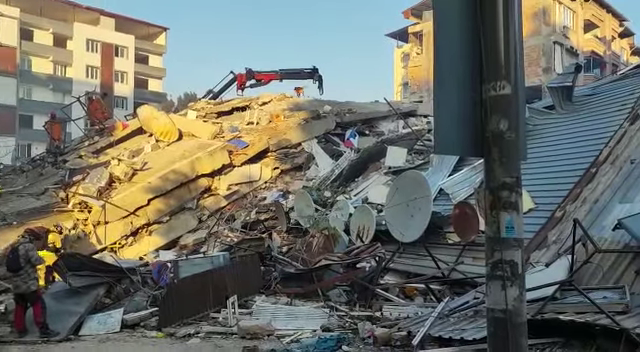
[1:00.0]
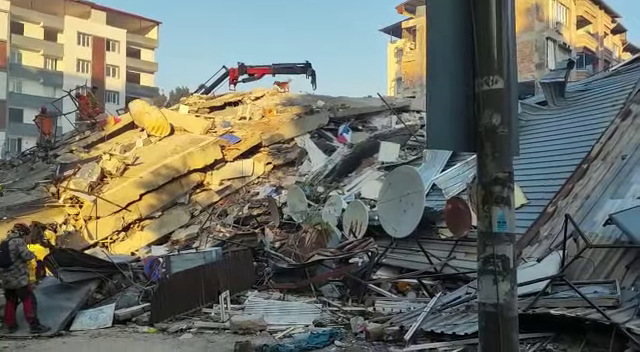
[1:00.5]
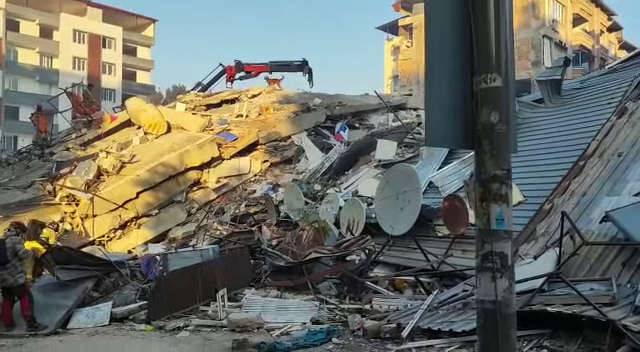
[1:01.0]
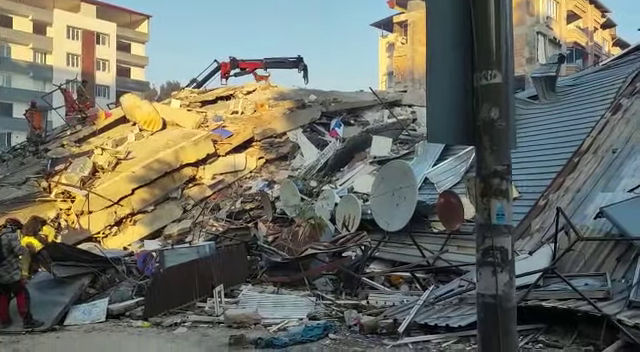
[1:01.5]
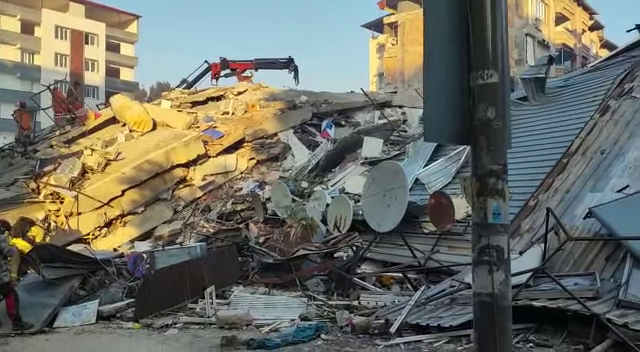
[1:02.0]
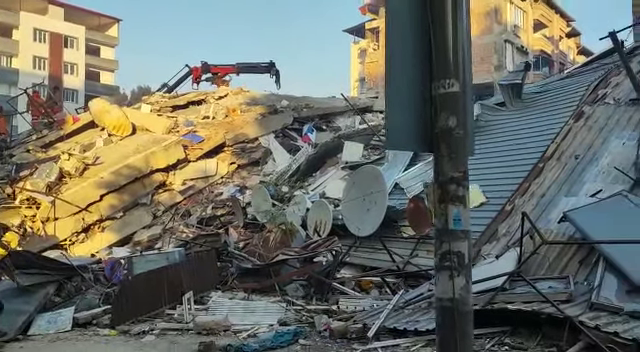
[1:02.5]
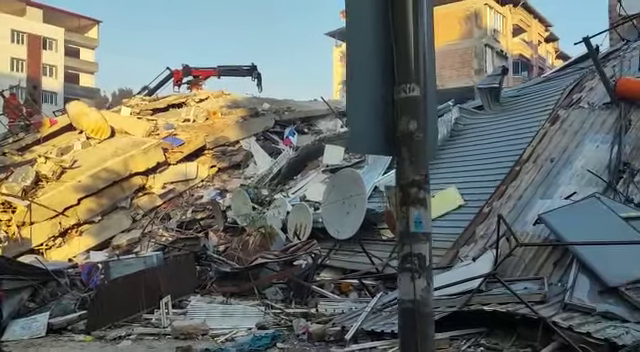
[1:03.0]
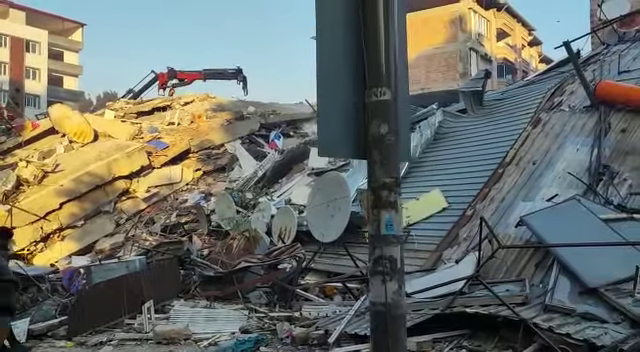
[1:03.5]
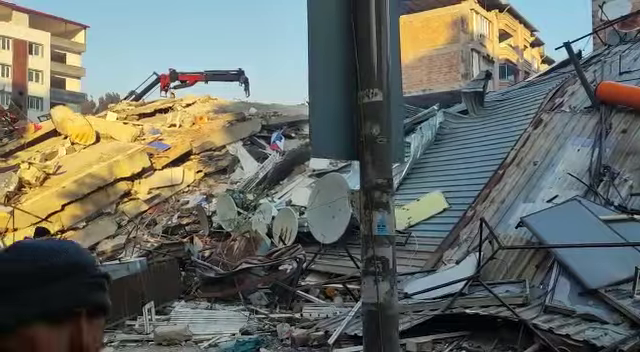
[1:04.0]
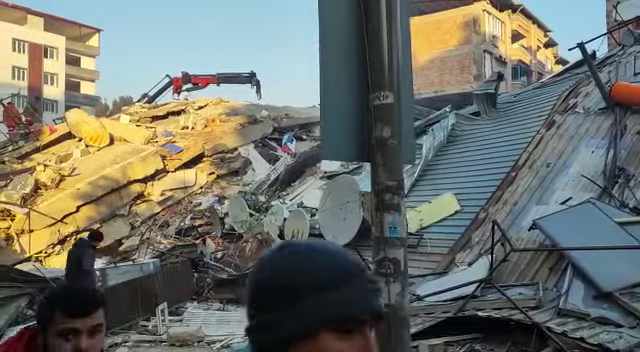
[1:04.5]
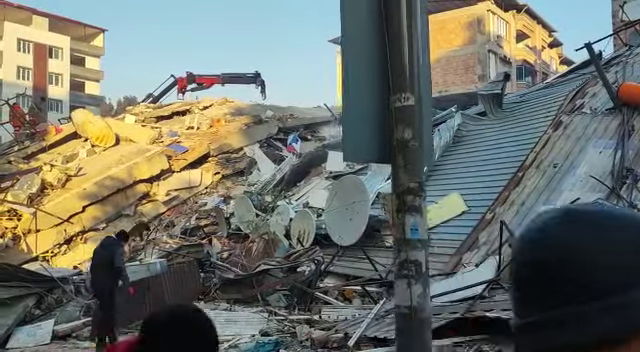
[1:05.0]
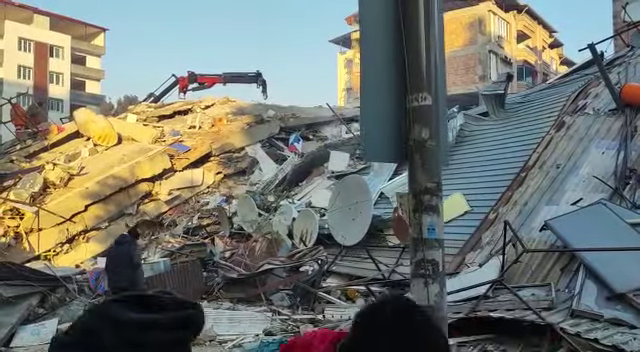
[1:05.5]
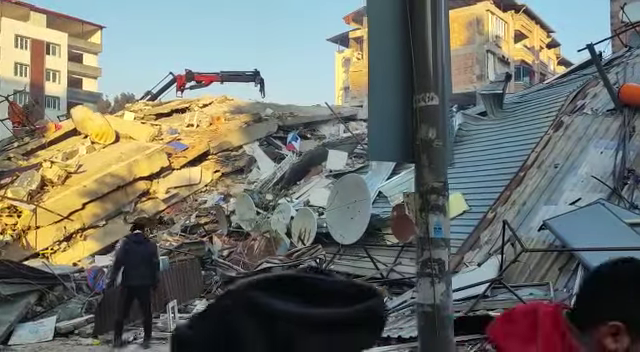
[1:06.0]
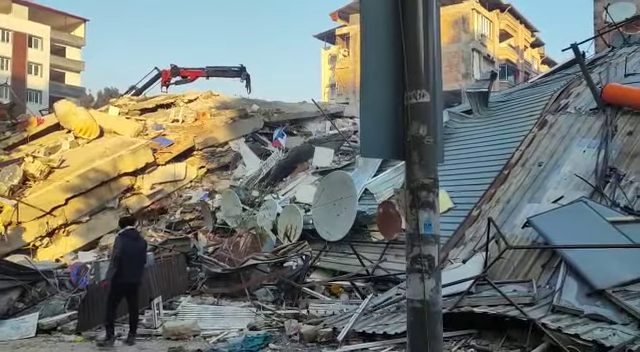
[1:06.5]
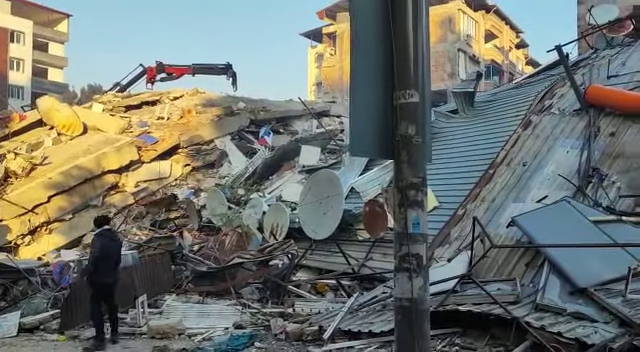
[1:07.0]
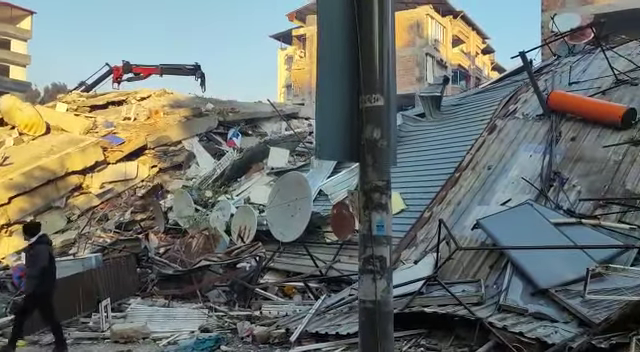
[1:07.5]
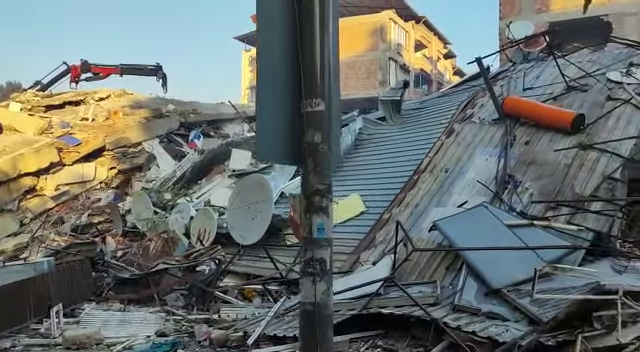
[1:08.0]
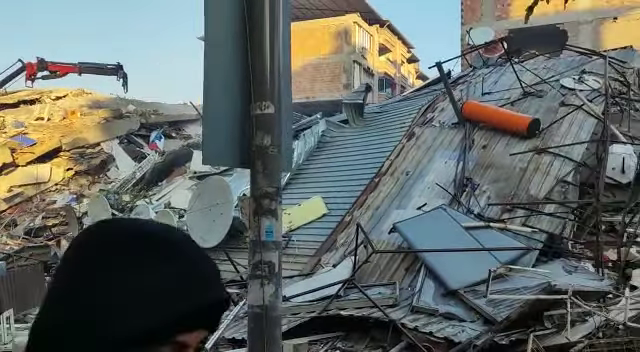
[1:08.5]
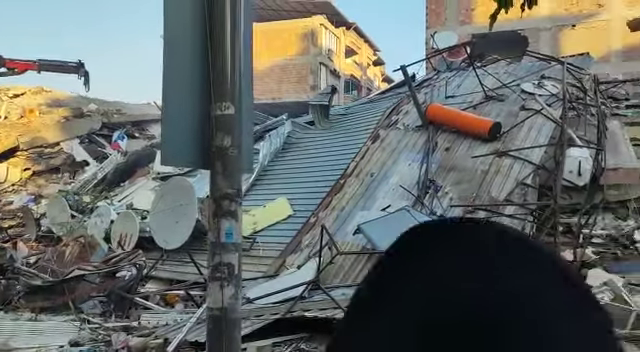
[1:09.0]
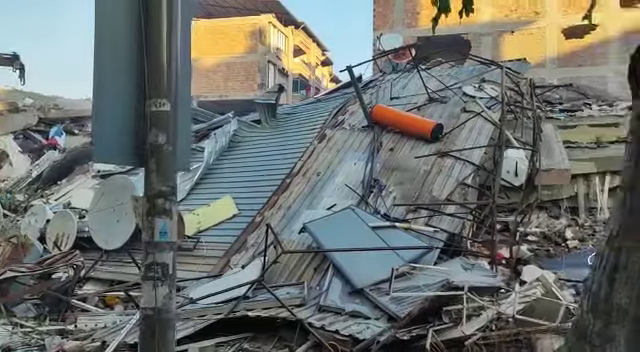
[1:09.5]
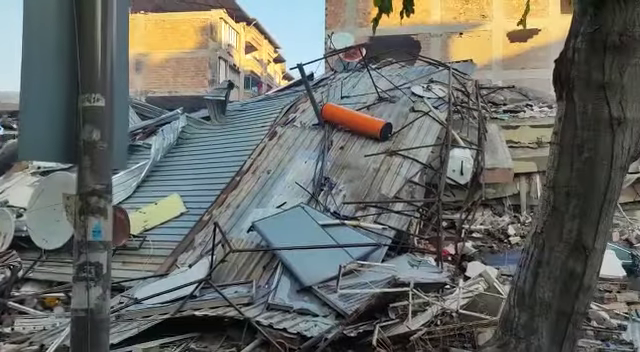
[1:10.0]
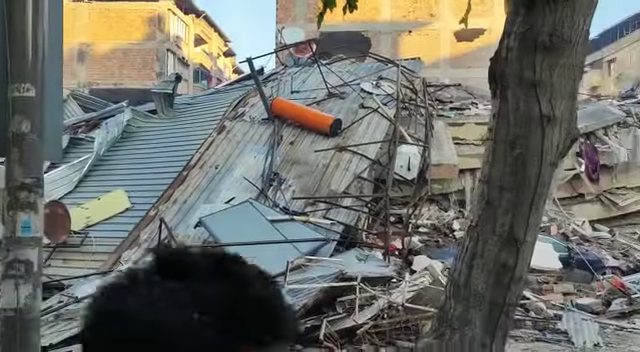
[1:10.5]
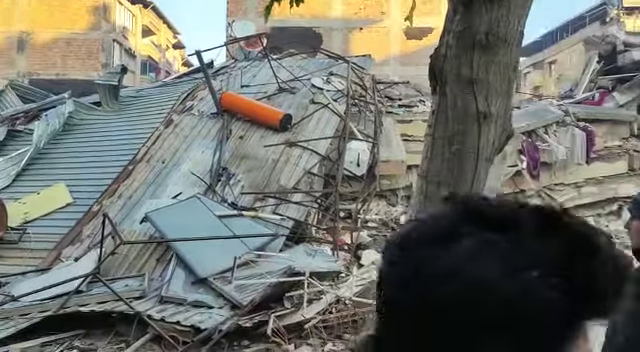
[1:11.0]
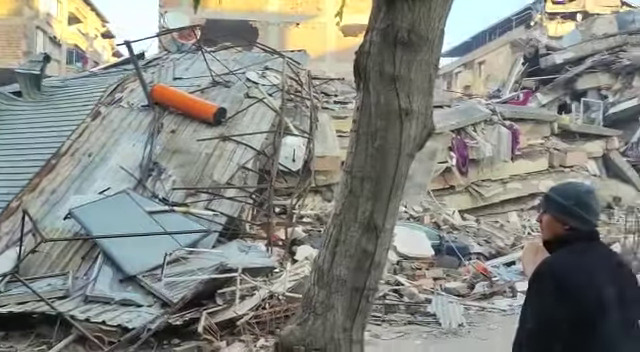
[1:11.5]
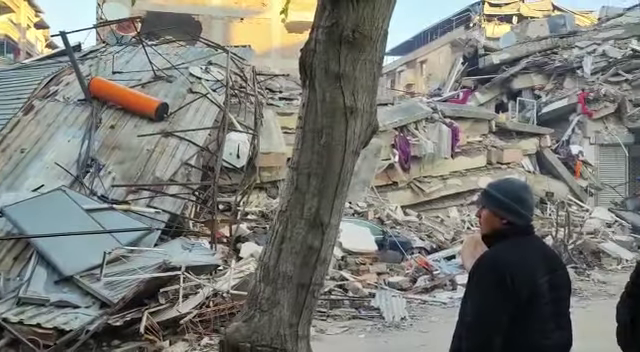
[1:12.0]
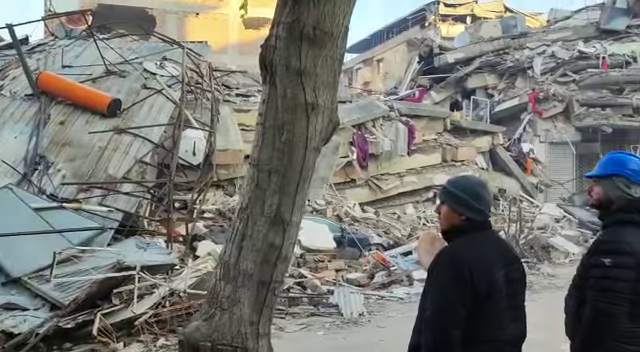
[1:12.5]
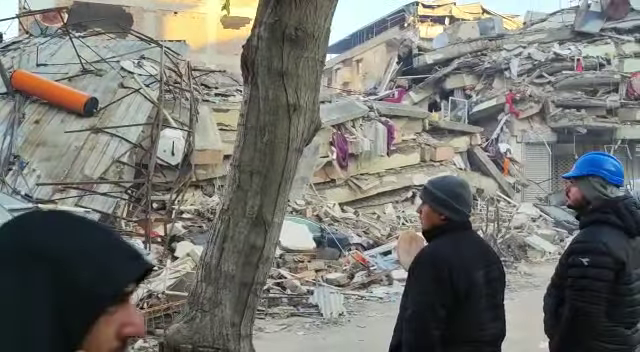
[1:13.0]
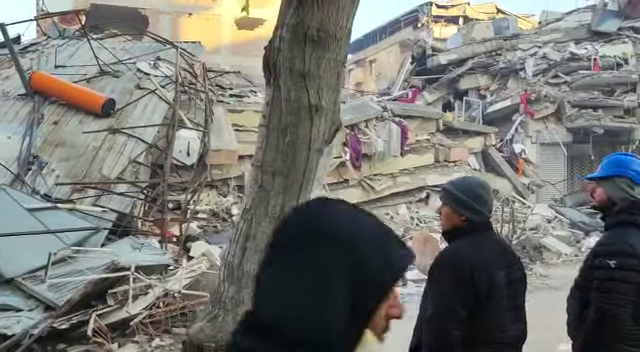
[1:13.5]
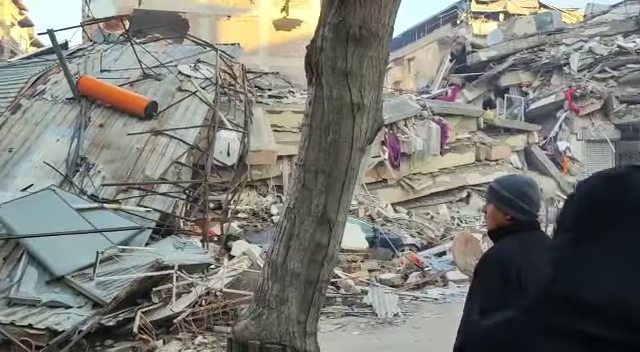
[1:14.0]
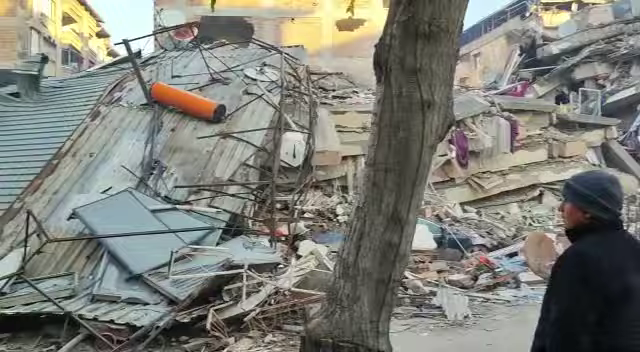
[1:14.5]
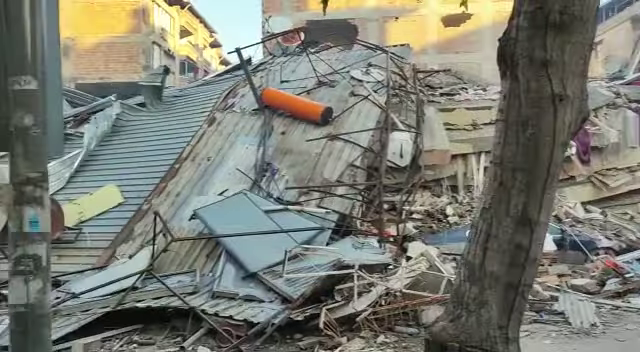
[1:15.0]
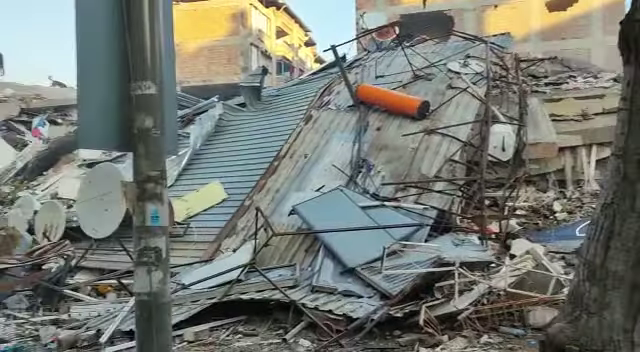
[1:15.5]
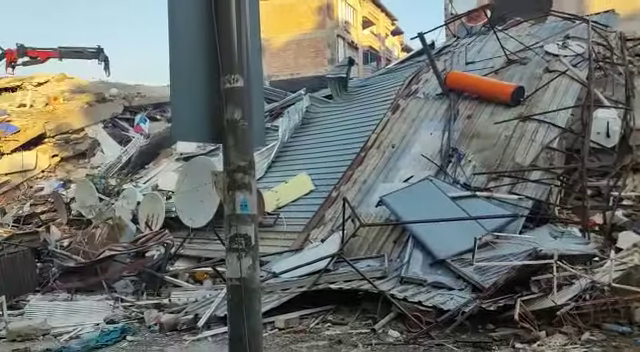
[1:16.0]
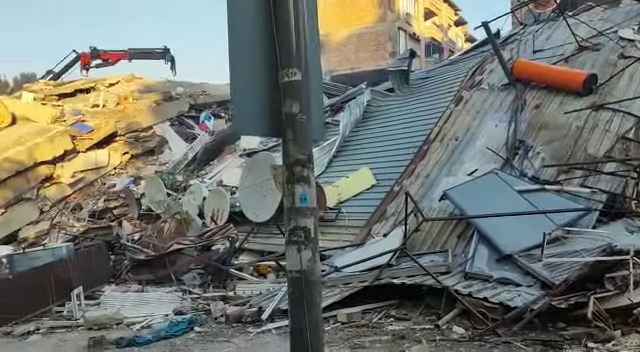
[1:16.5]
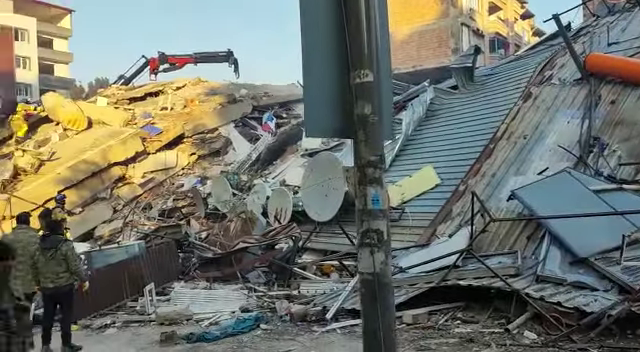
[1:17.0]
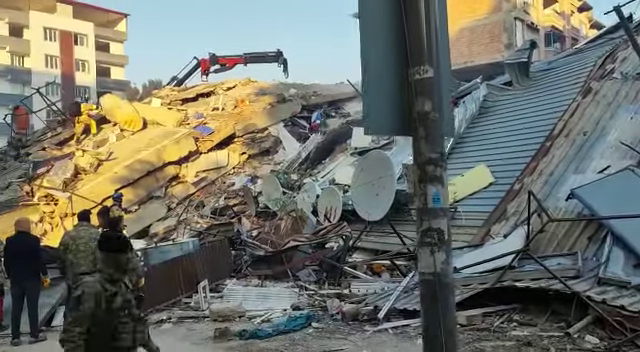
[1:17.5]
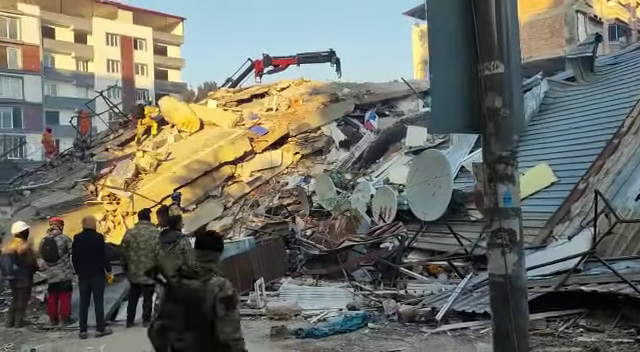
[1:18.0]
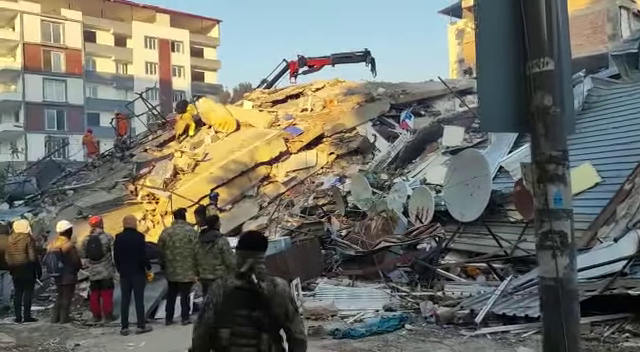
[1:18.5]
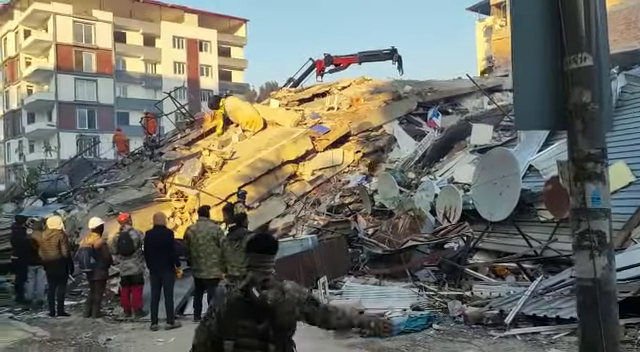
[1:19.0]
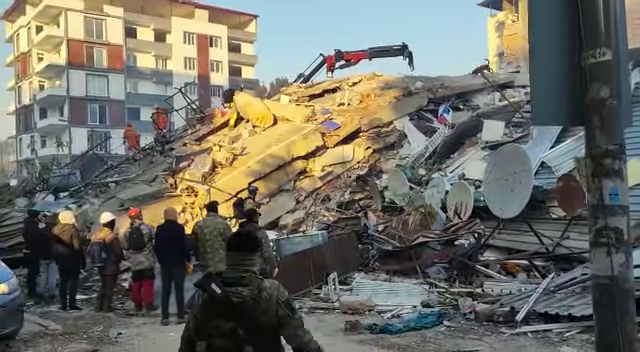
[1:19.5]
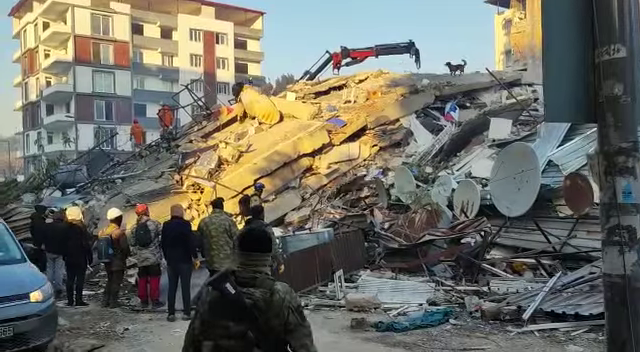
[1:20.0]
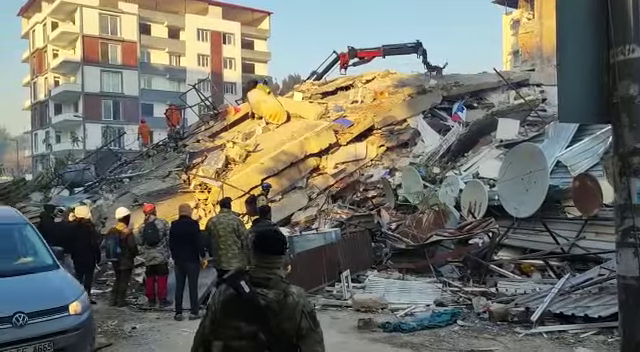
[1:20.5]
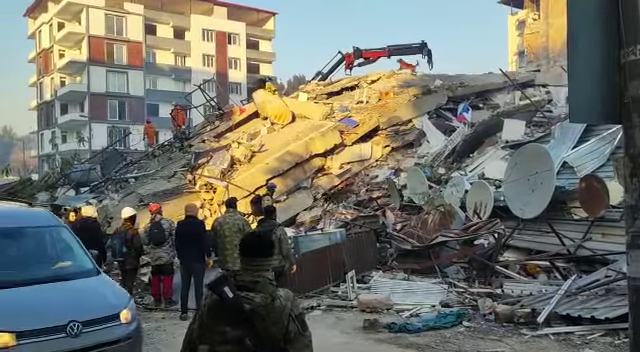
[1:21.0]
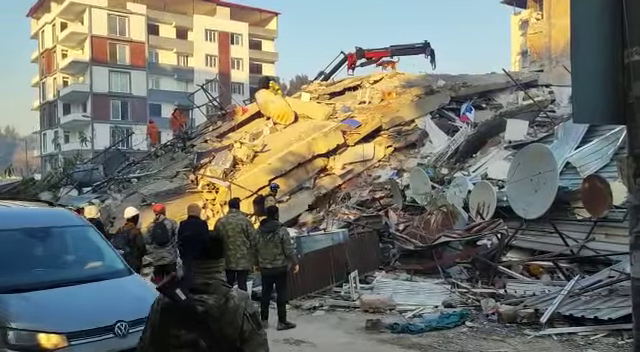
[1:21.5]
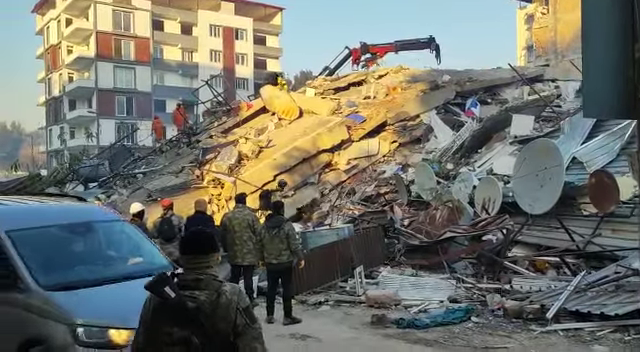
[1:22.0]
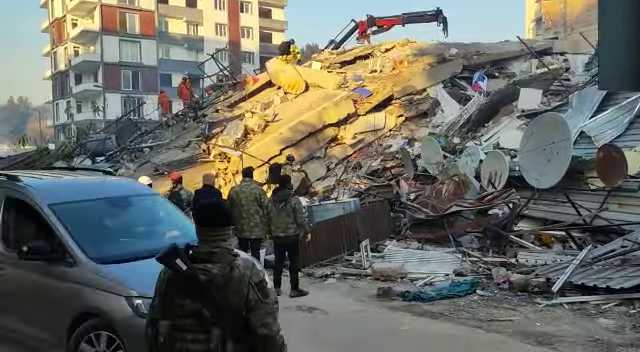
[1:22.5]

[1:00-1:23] The dog begins to sprint at the top of the rubble, wagging its tail. It is a small to medium-sized brown dog with long hair. A second dog of much the same stature has a darker brown coat. Both begin to sniff around the top of the rubble, moving back and forth and coming down, seemingly searching. The camera pans to the right side, revealing more of the collapsed building. This part has collapsed differently, seeming to have just fallen down, whereas the area where the dogs are sniffing appears to be layers and layers of brick, building material and items such as furniture, computers and other hardware like antennas.